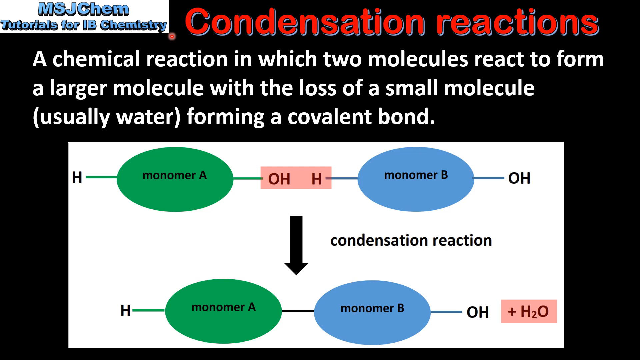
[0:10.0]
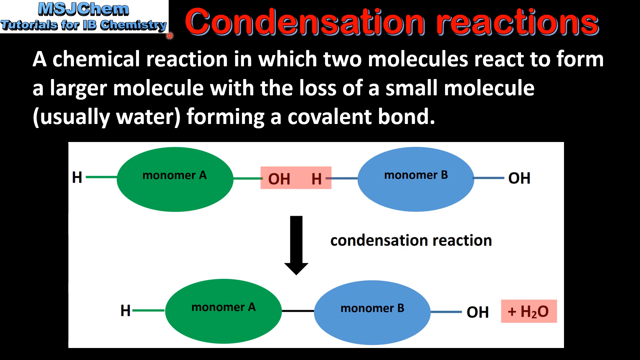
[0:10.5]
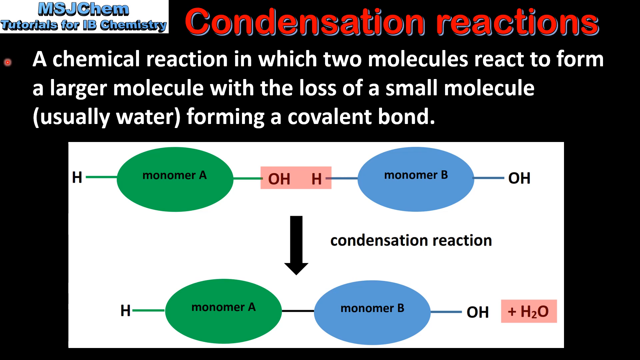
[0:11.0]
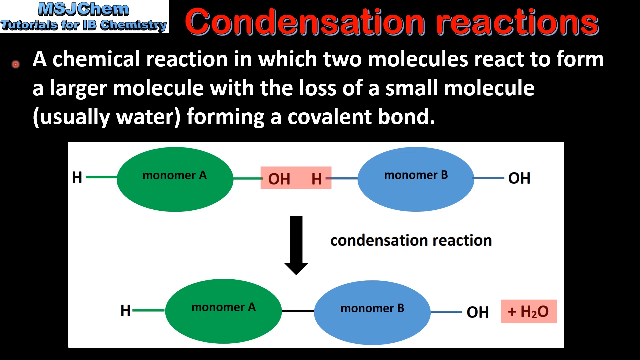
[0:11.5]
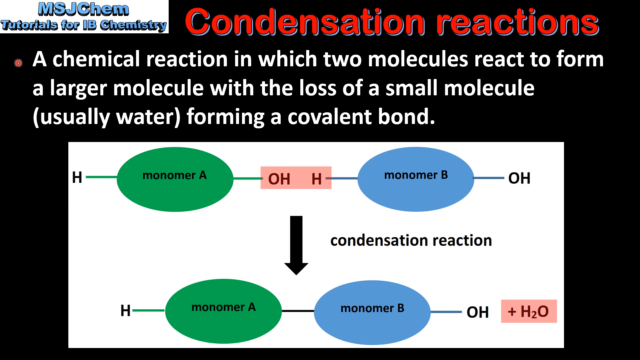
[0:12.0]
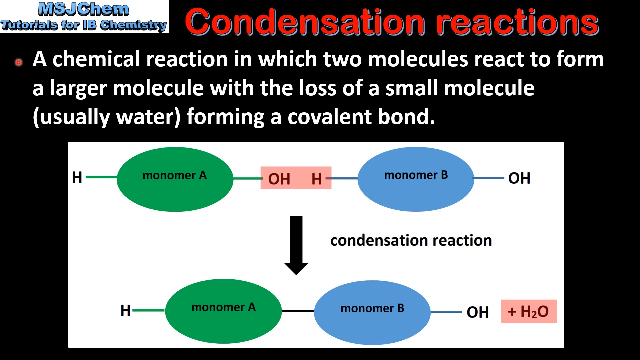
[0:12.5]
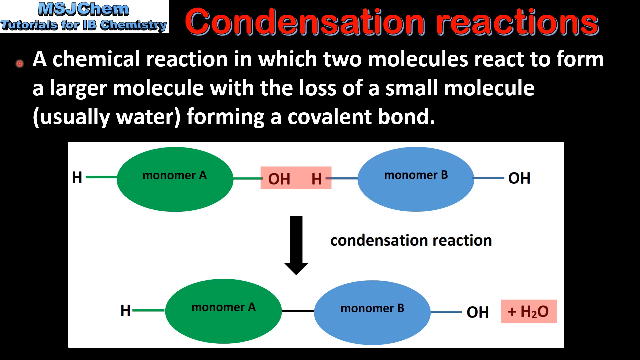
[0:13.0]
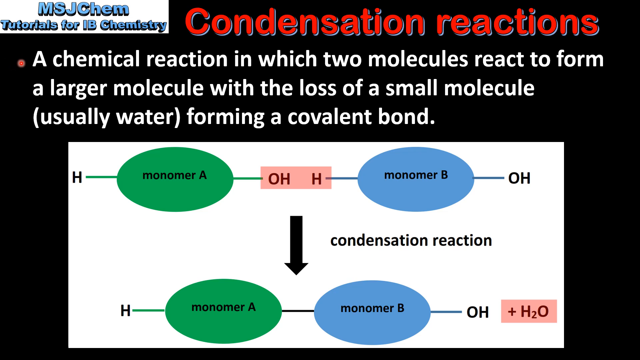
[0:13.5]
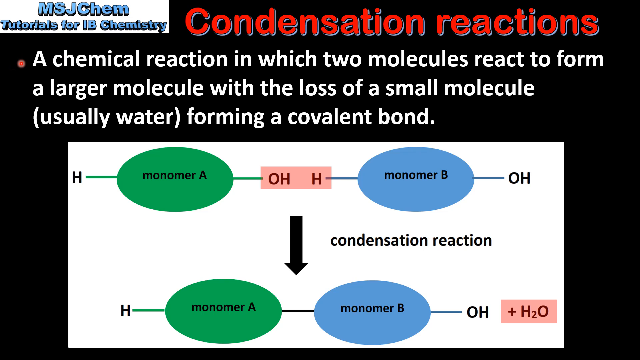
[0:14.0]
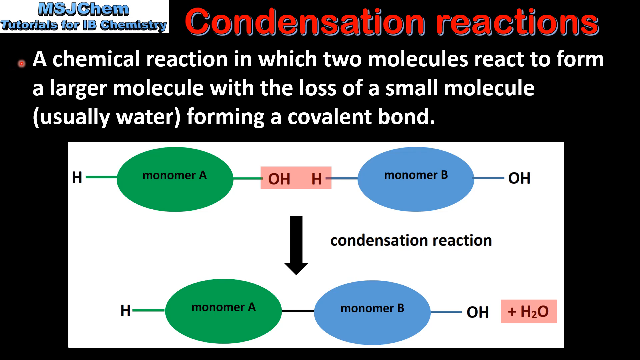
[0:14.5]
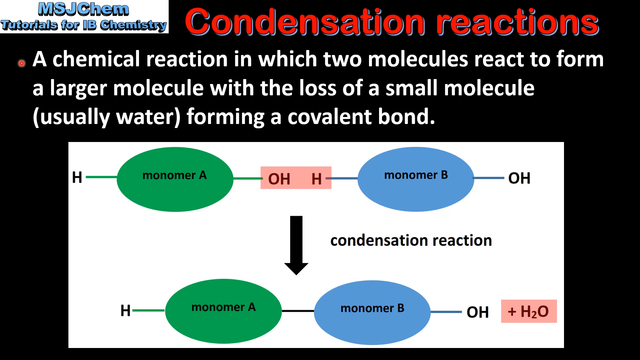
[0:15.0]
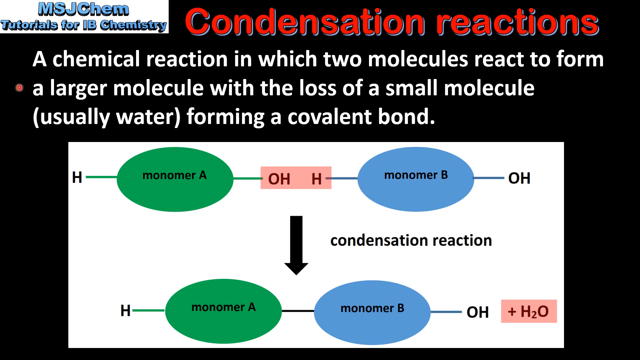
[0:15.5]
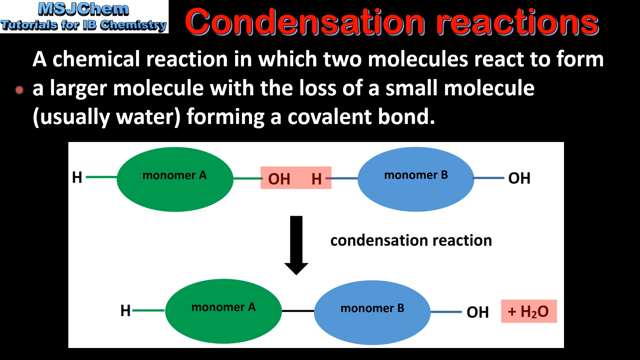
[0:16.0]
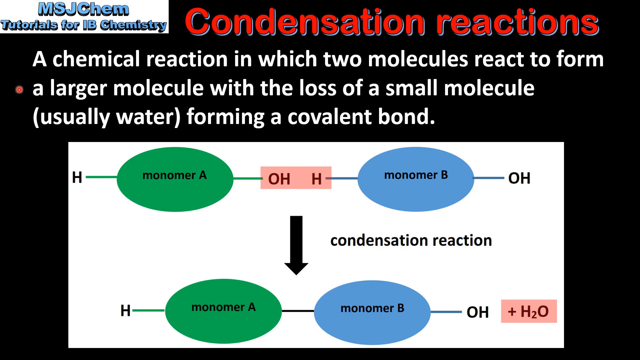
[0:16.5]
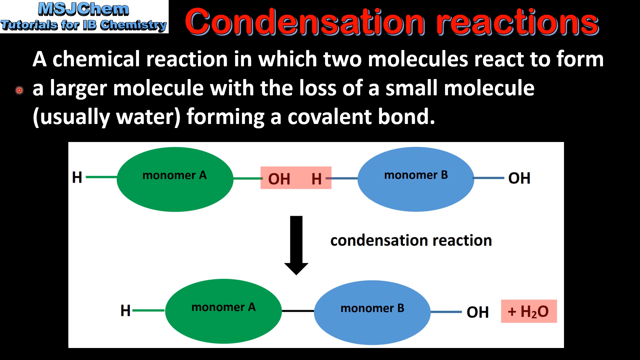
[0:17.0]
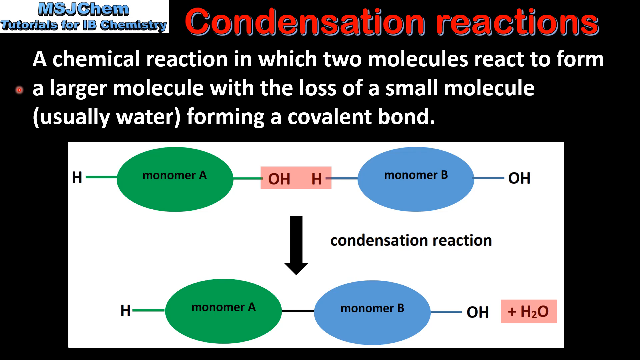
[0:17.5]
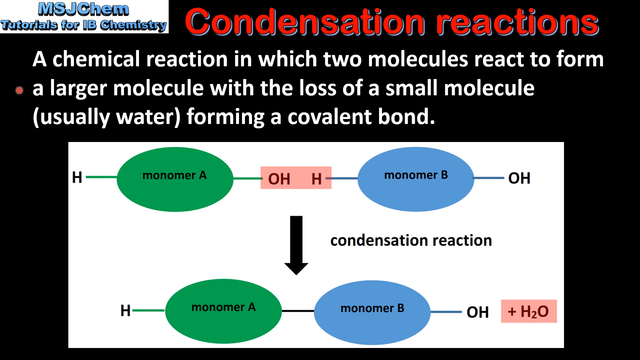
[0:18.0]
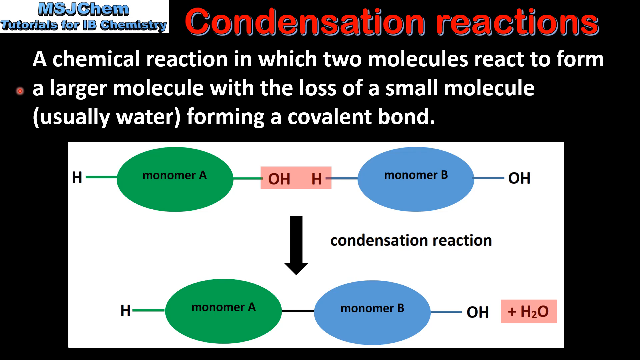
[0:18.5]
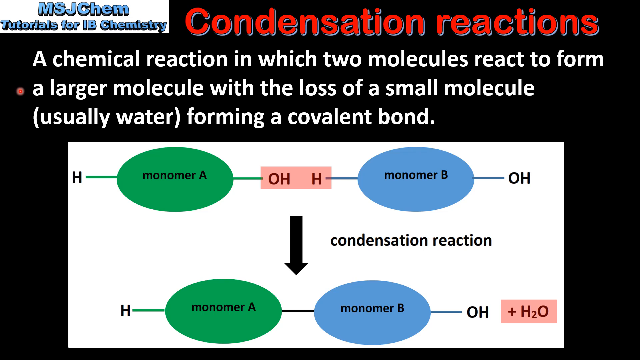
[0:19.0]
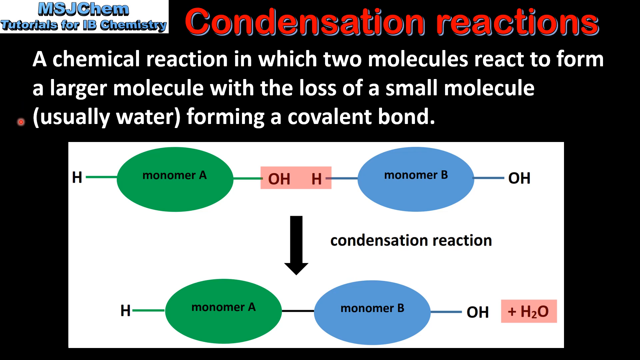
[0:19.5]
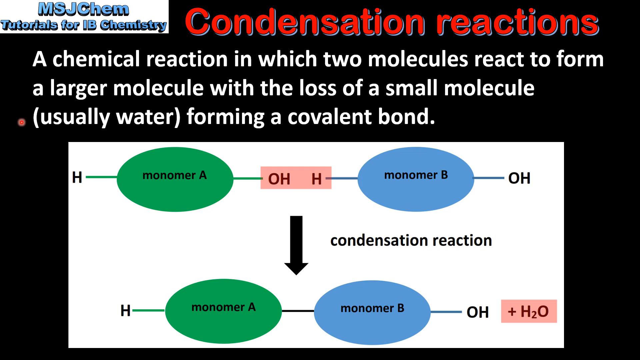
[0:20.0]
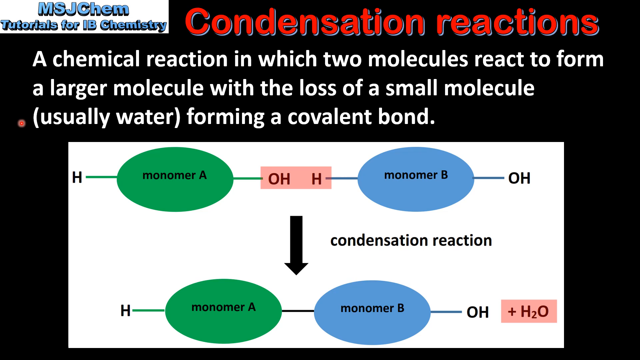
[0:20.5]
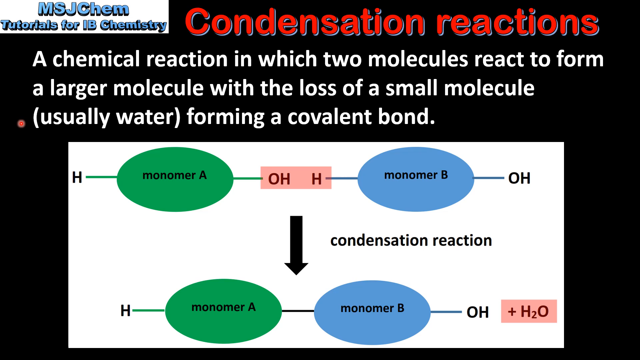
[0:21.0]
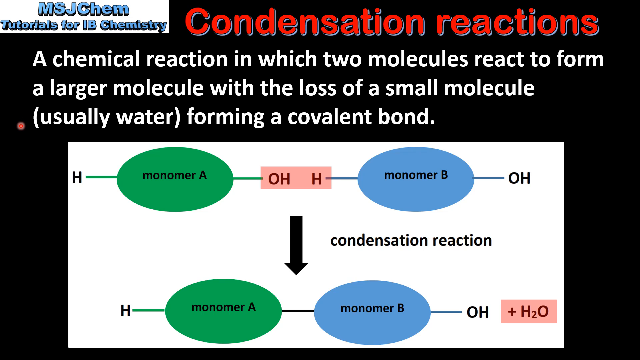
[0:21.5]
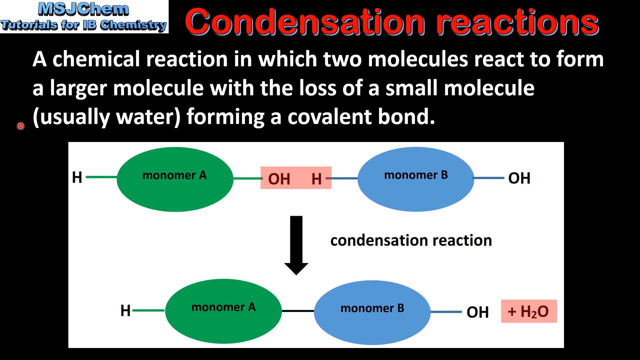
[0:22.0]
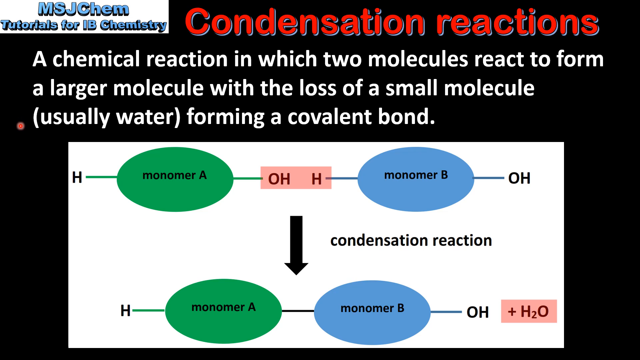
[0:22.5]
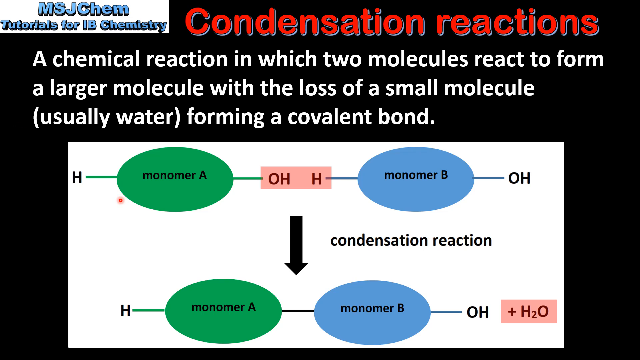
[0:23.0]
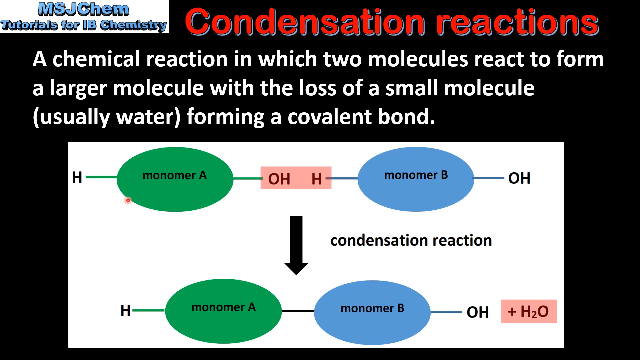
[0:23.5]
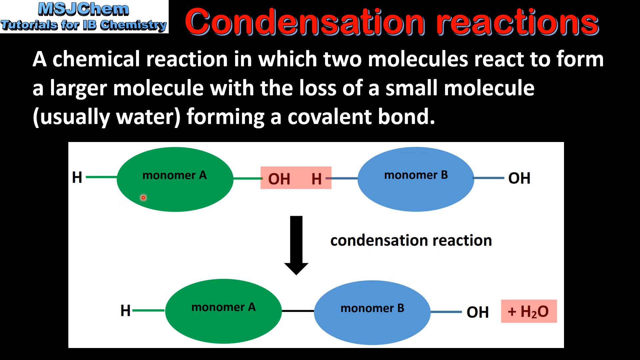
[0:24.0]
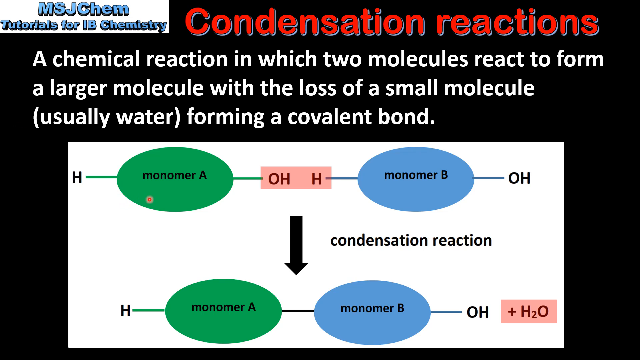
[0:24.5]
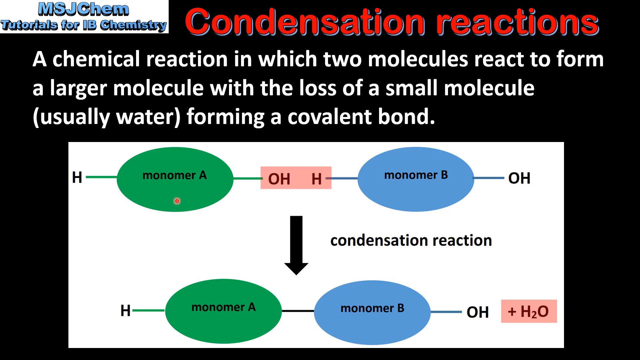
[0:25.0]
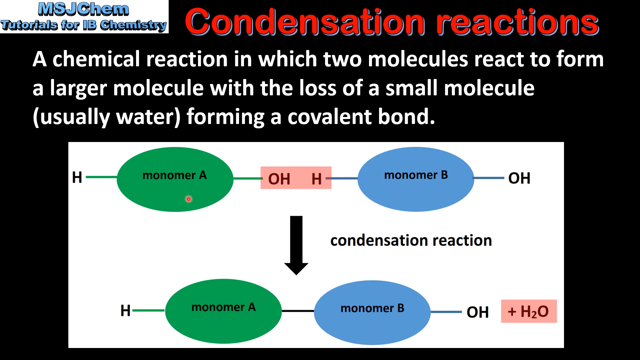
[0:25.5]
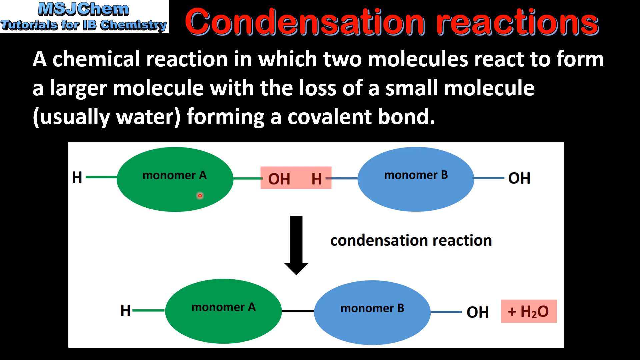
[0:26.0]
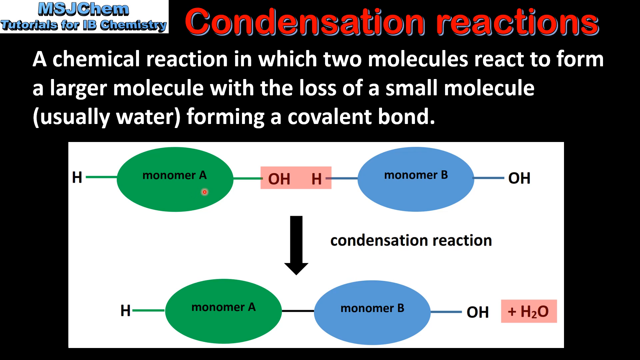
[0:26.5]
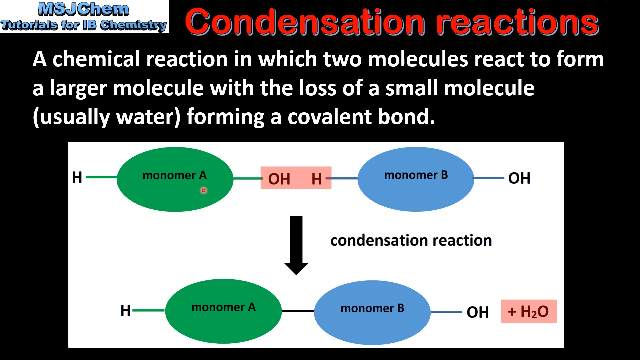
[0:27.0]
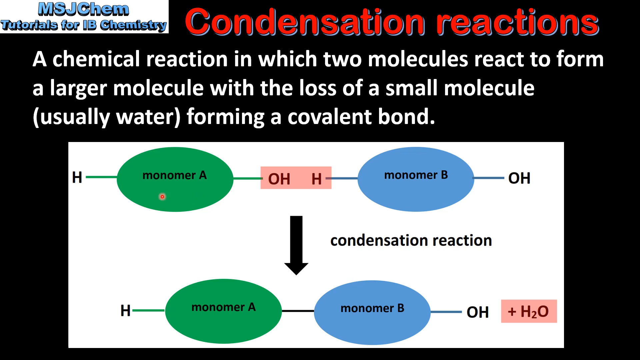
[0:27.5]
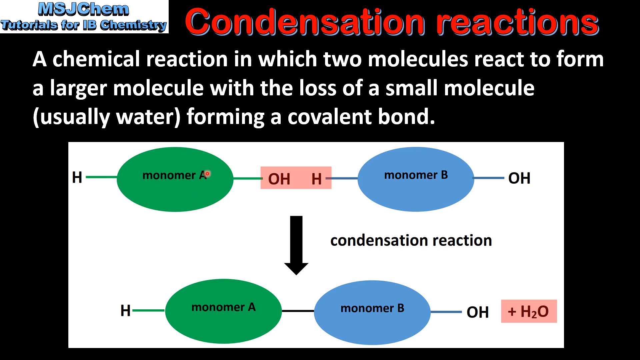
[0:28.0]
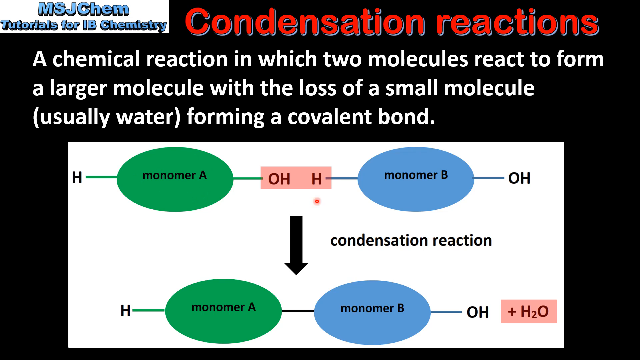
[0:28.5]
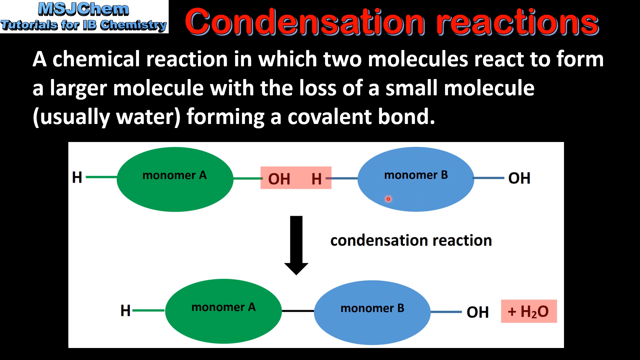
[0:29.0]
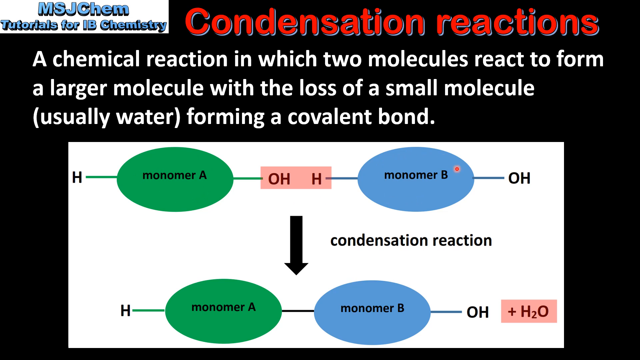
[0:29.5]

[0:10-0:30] The screen has a black background with a white banner at the top carrying blue text that reads "MSJ chem tutorials for IB chemistry." Red text next to it reads "condensation reactions," and a paragraph of white text reads "a chemical reaction in which two molecules react to form a larger molecule with the loss of a small molecule usually water forming a covalent bond." A white box holds green and blue circles and pink boxes, with black text labels throughout reading "H monomer A OH H monomer B OH H monomer A monomer B OH plus H2O." A black arrow pointing down is labeled "condensation reaction" in black font. A small red circular cursor moves throughout the page.